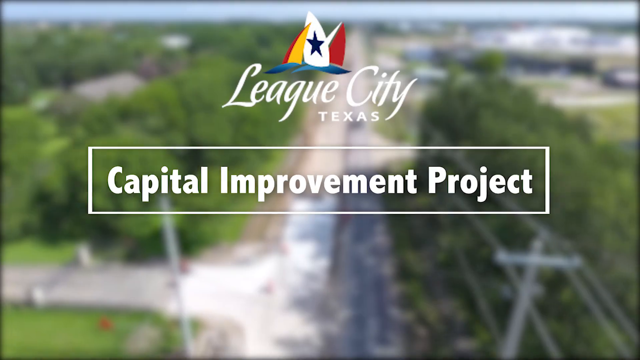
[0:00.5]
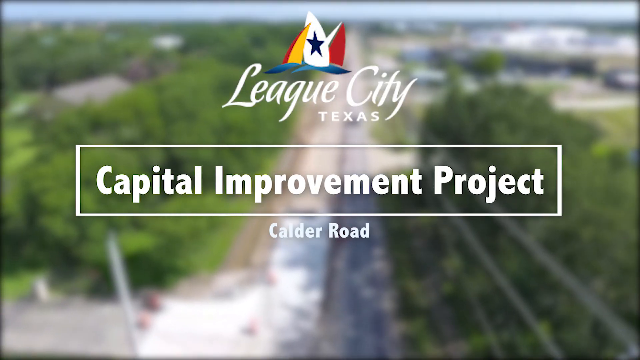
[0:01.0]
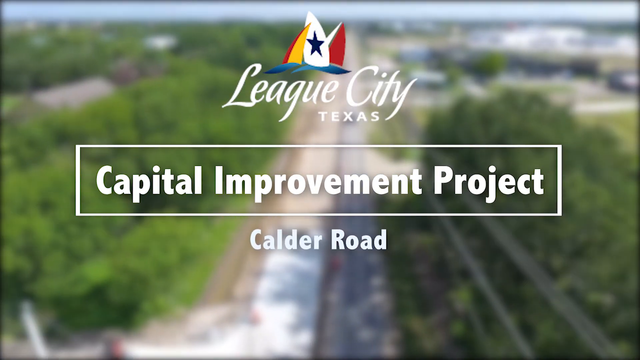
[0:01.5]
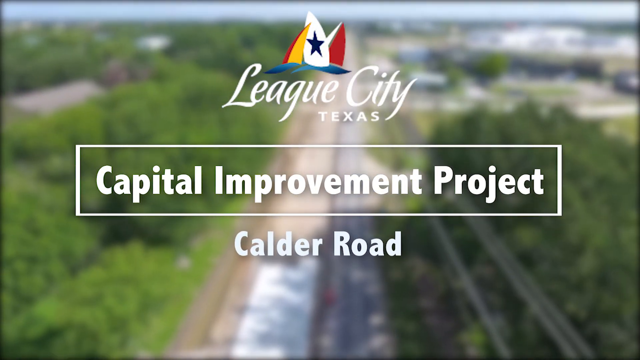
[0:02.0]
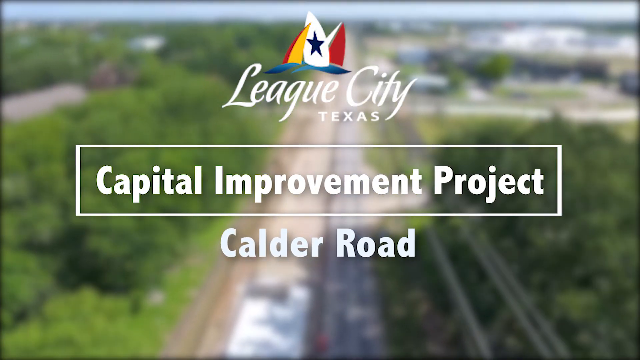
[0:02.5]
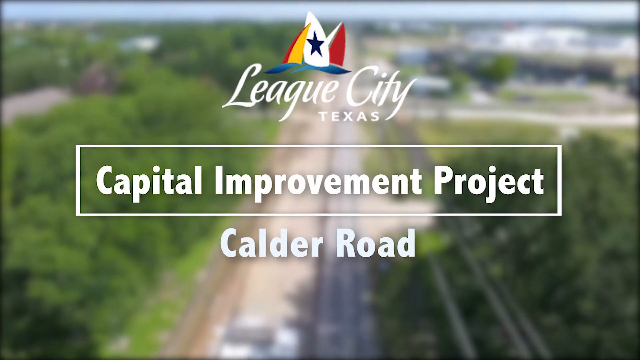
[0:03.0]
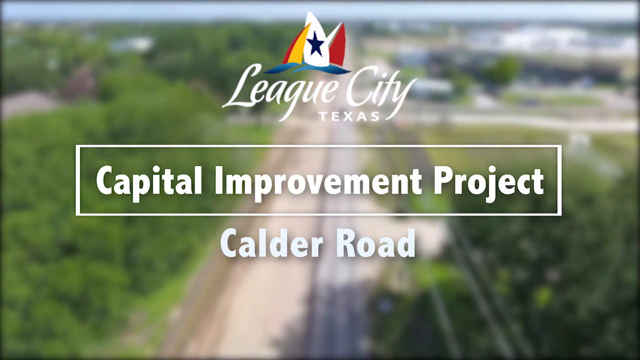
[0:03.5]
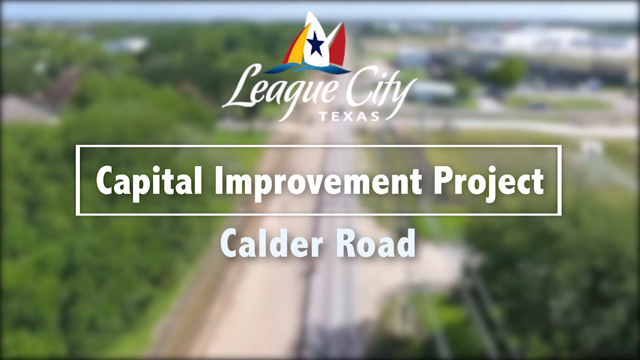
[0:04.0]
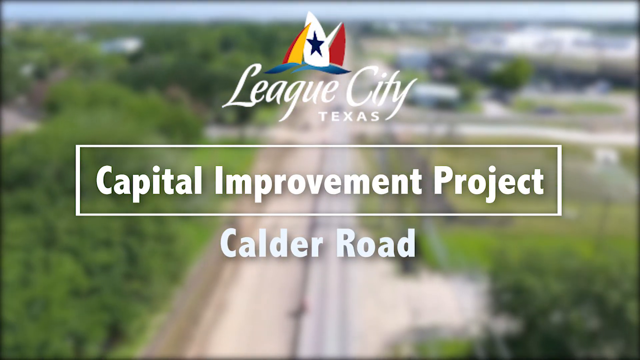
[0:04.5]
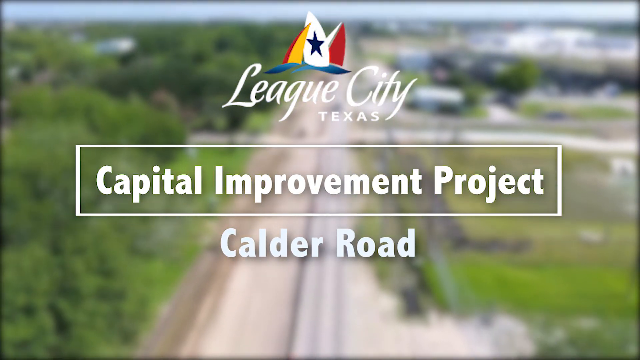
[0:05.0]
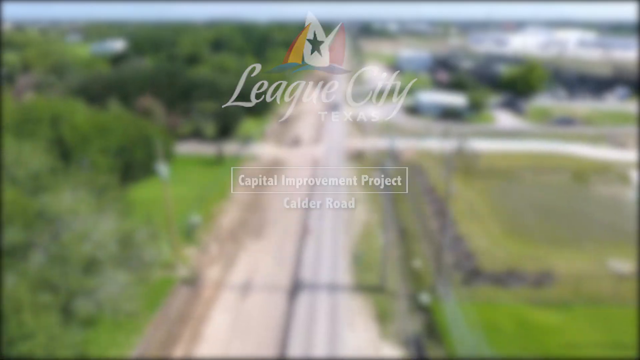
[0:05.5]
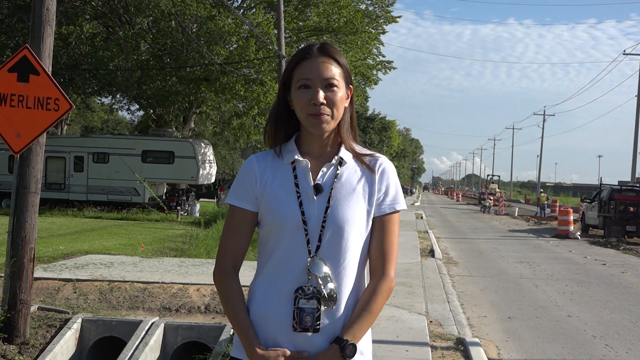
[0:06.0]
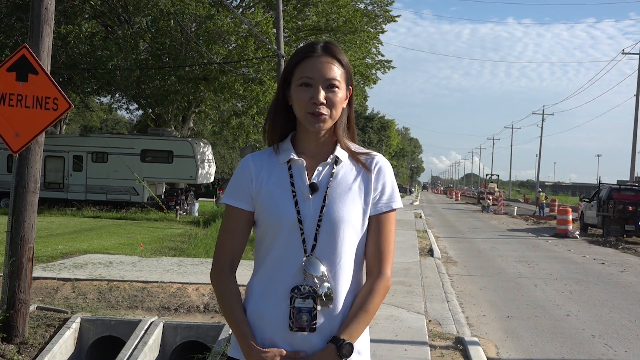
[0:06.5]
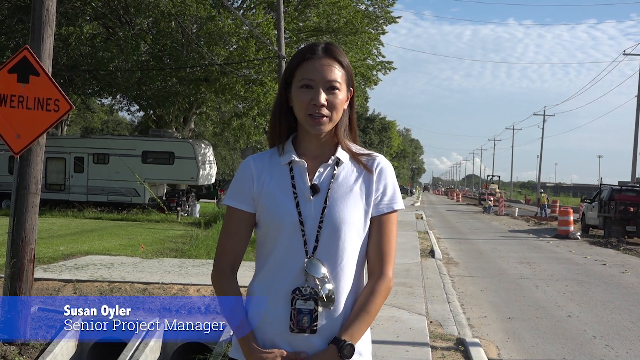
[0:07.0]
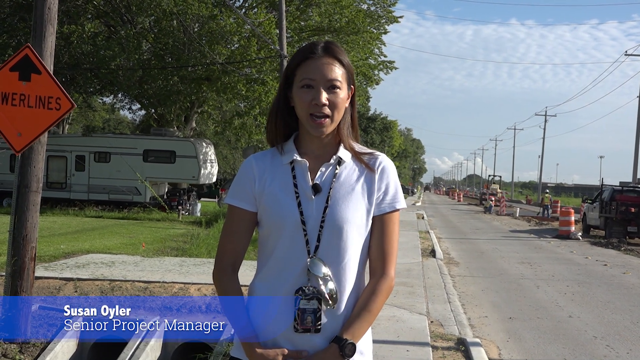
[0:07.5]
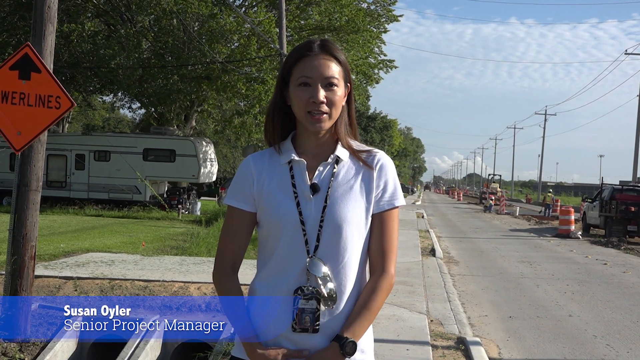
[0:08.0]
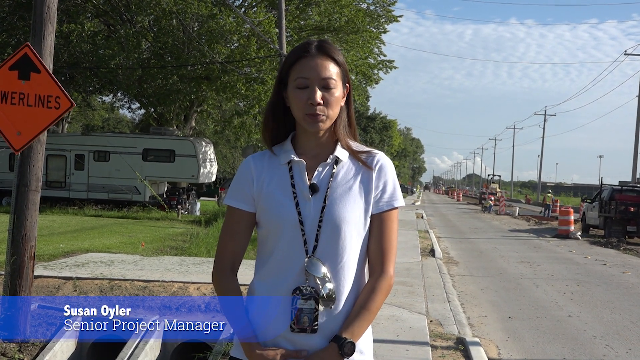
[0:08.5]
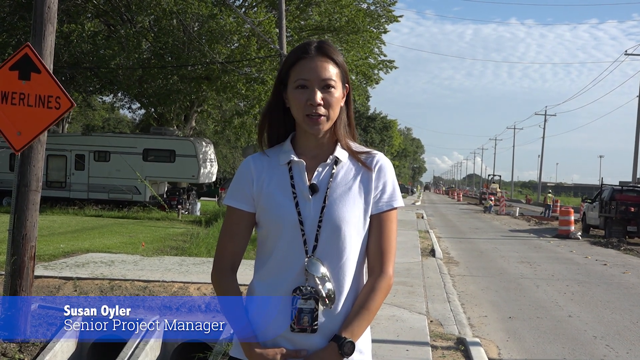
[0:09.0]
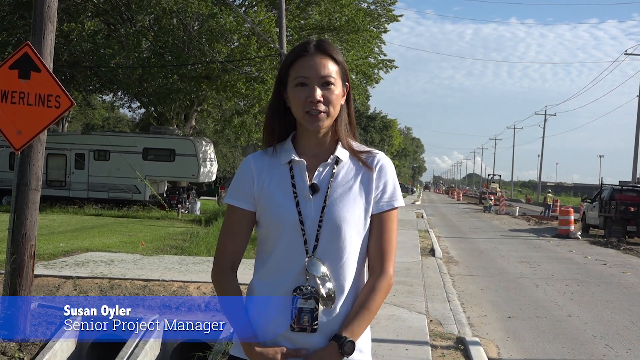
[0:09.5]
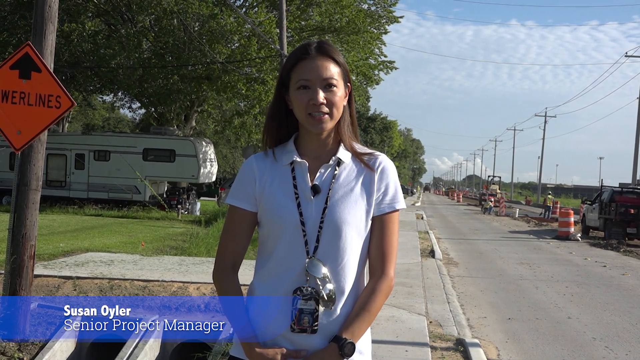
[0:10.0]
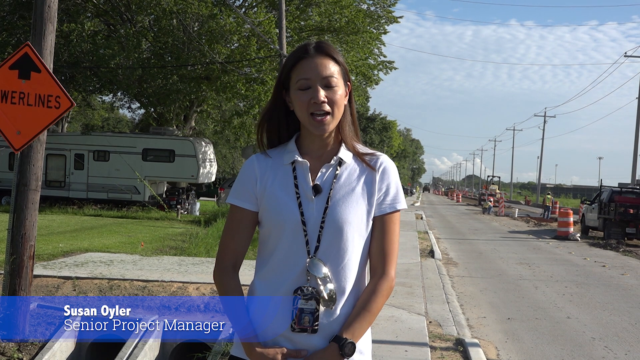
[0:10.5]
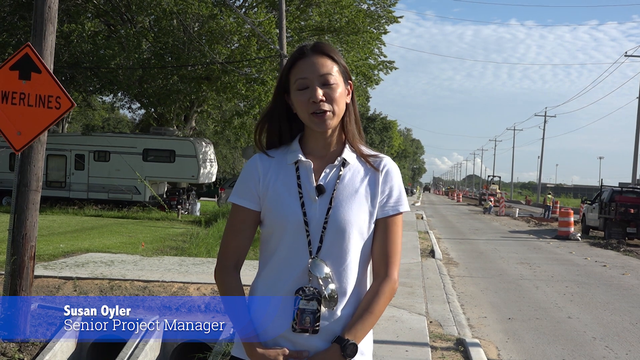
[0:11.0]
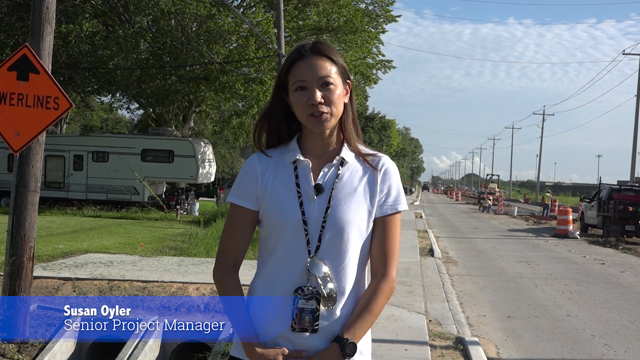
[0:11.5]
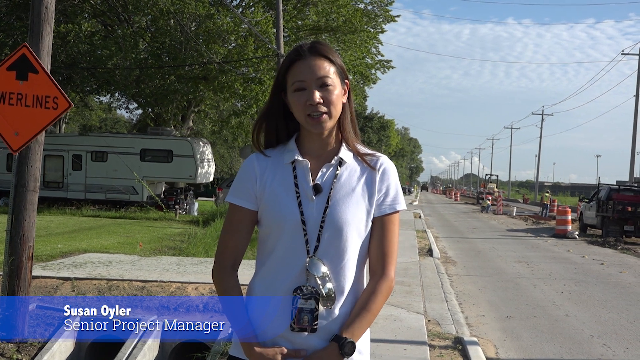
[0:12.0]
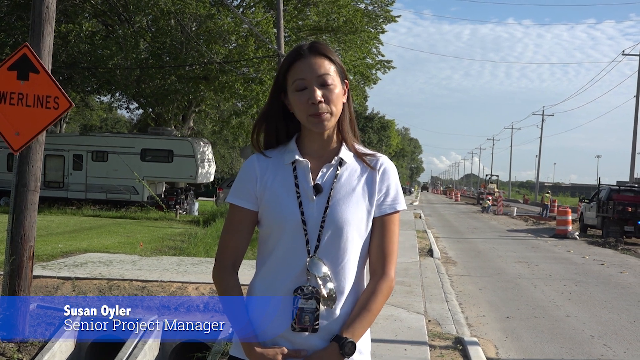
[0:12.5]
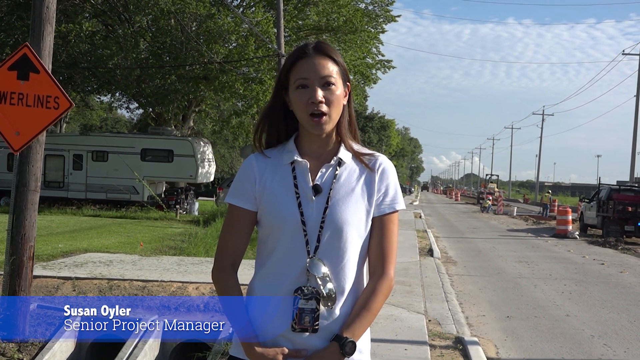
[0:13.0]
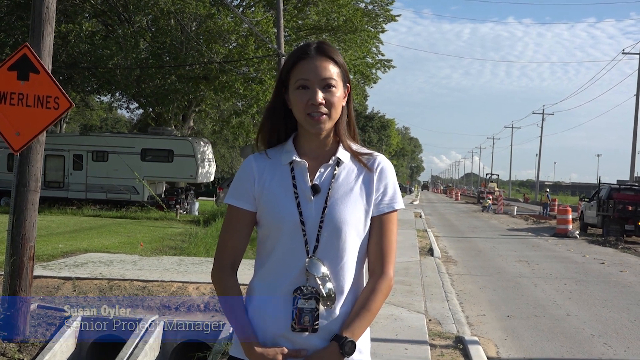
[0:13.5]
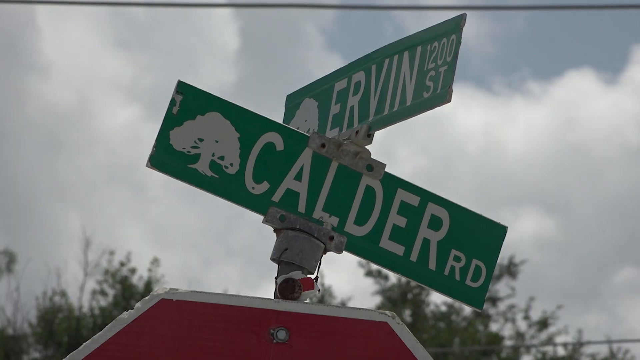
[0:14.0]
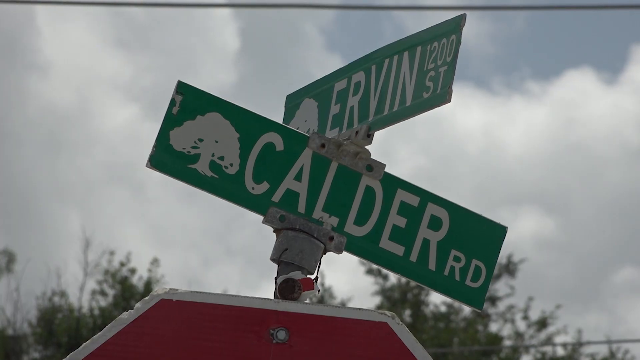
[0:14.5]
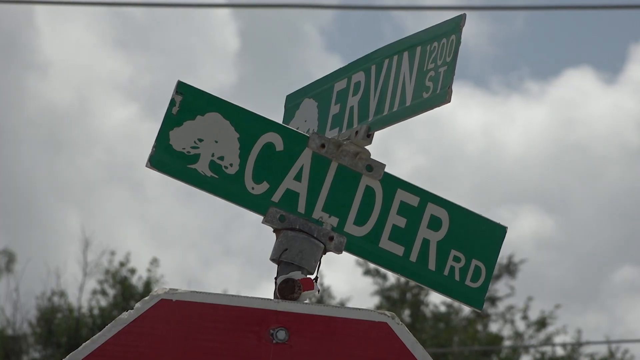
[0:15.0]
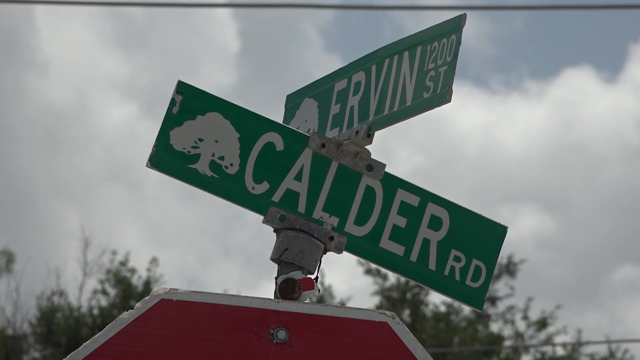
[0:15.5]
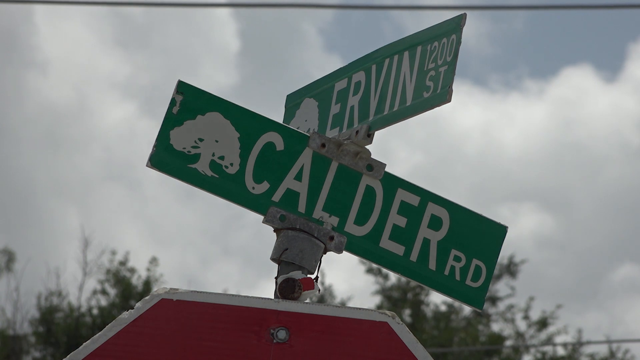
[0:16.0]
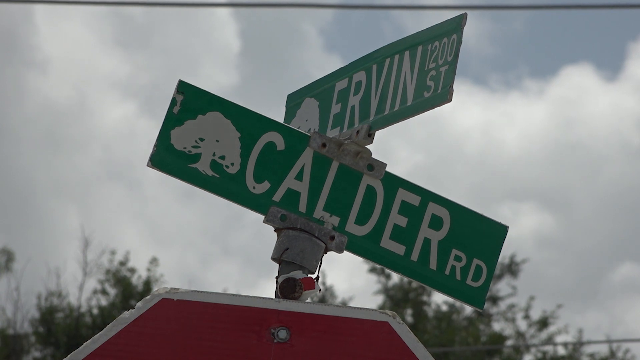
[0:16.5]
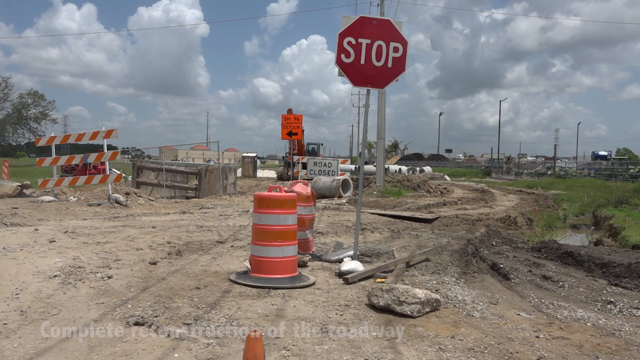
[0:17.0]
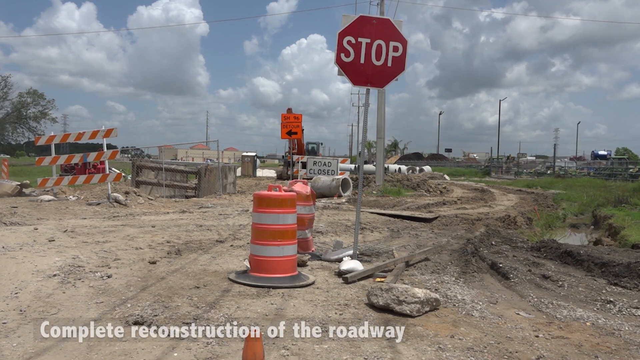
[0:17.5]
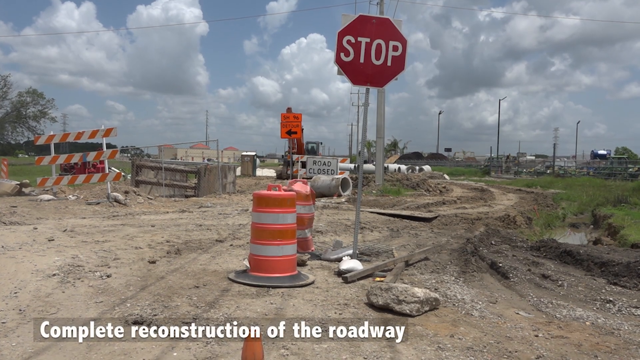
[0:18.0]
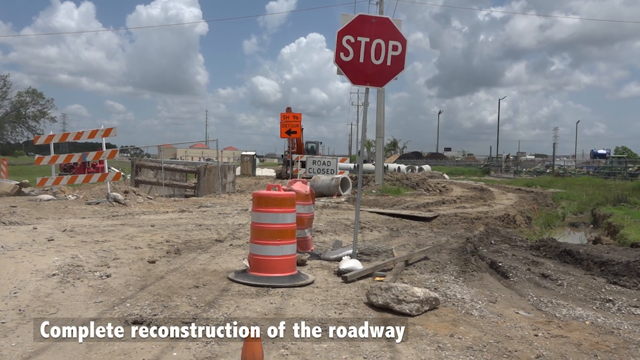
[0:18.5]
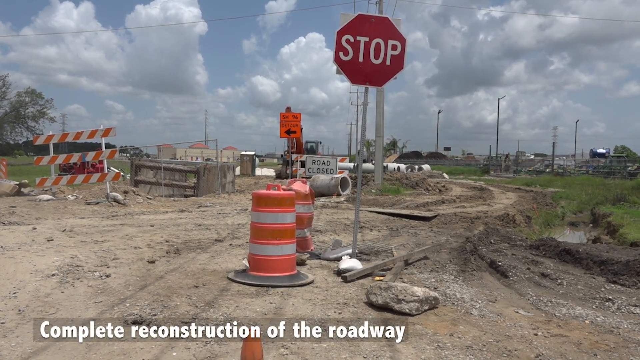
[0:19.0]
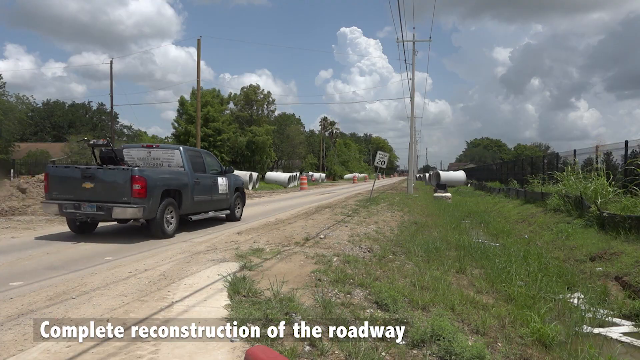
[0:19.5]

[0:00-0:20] The video is for League City, Texas, about a capital improvement project on Calder Road. In the background is an aerial view of a street with trees on each side, along with what look like city logos. Calder Road becomes larger as the background flies over the area. A young spokesperson with a lanyard, wearing a white polo shirt and with long brown hair, is standing roadside. An orange sign is to the left on a power pole. It appears to be late afternoon, with shadows on the road, and street workers, construction workers, are across the street. As she talks she makes some eye movements, her hands down by her sides, a little in front. The video cuts to an intersection with two street signs, Earvin and Calder; Earvin sits on top of Calder and is a little crooked. Next comes an area being worked on: big yellow cylindrical bumpers next to a stop sign, a dirt road that has started to be paved, and other barricades. A caption says "construction" and then "complete reconstruction of the roadway". A paved street follows, with a gray truck driving through it.